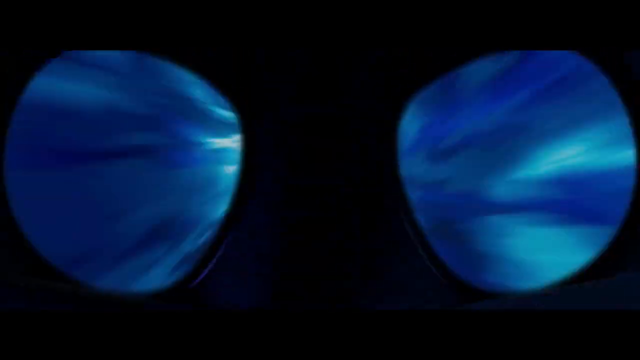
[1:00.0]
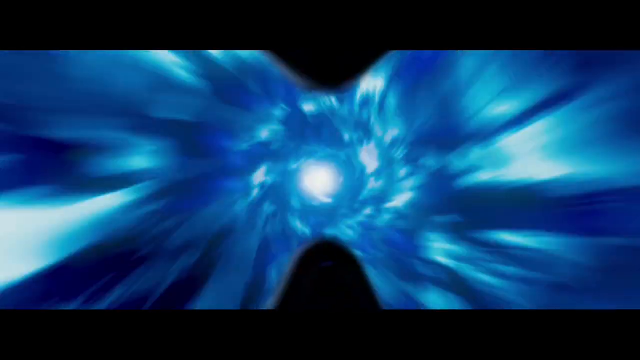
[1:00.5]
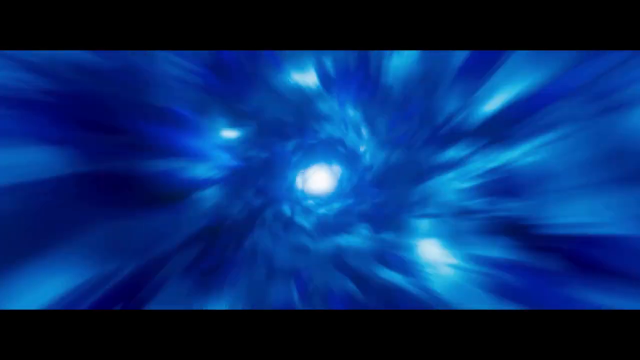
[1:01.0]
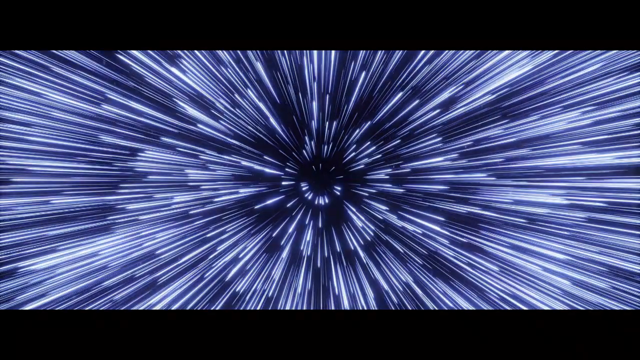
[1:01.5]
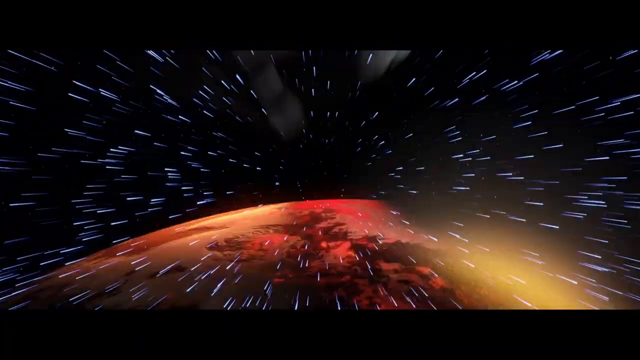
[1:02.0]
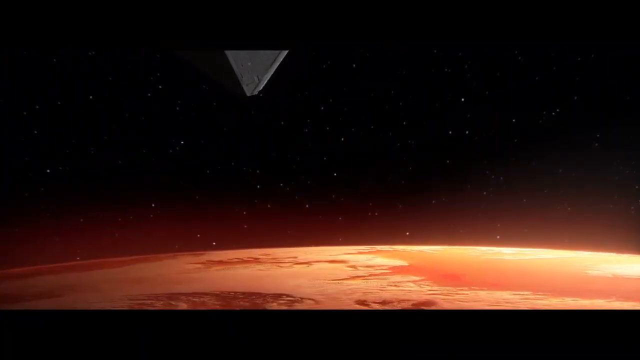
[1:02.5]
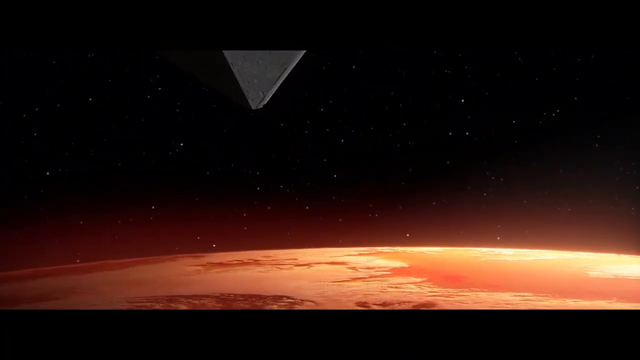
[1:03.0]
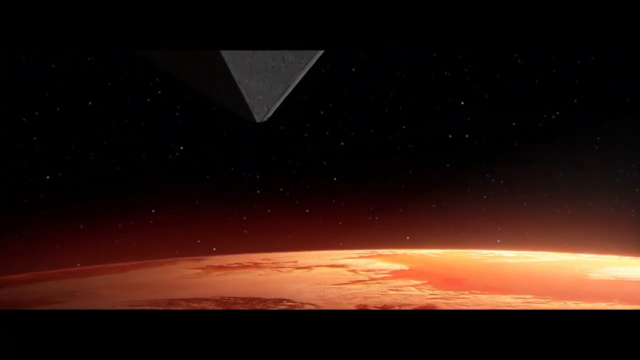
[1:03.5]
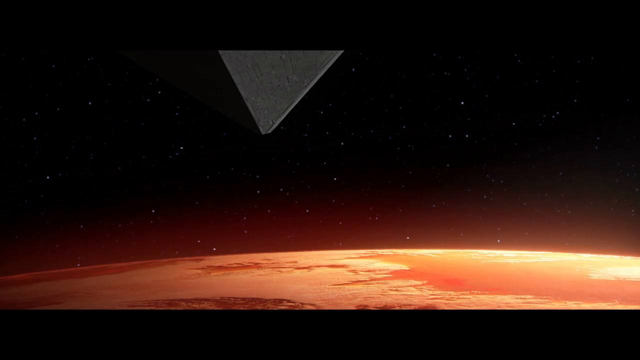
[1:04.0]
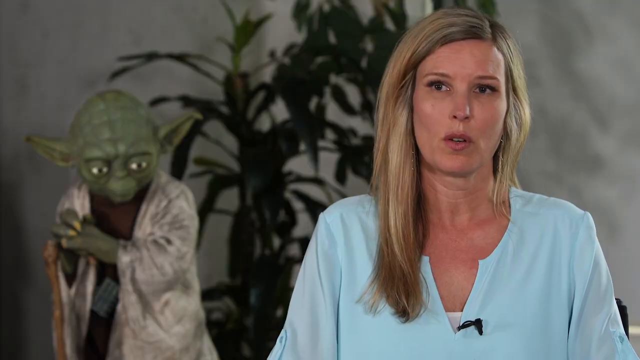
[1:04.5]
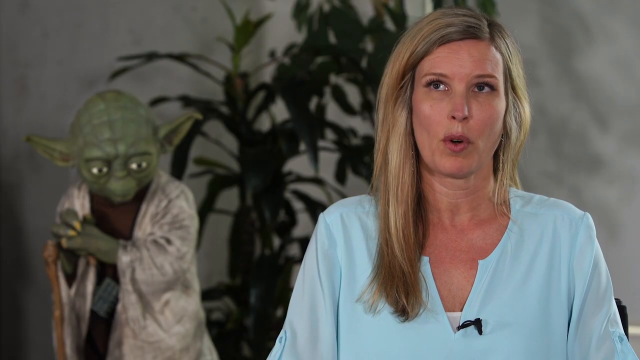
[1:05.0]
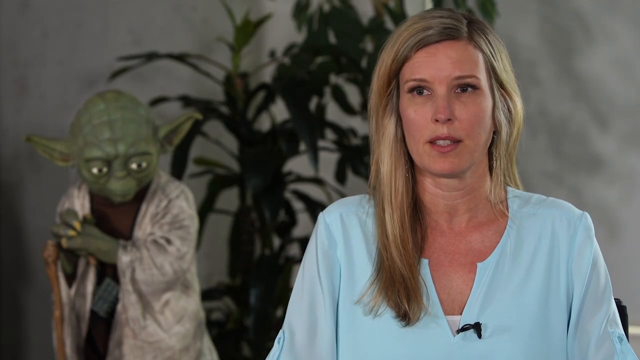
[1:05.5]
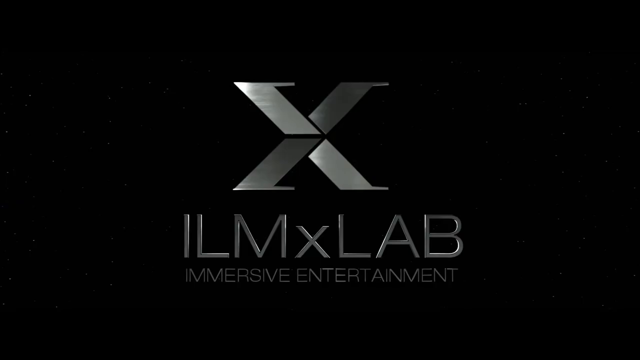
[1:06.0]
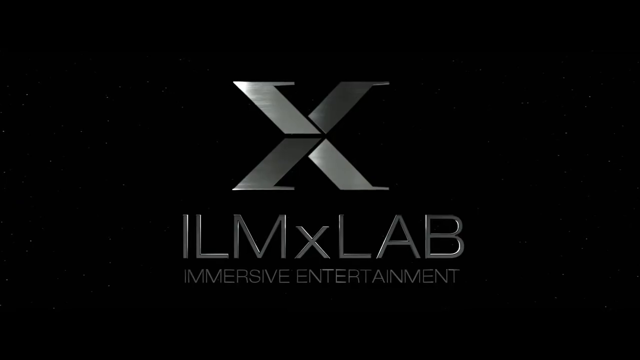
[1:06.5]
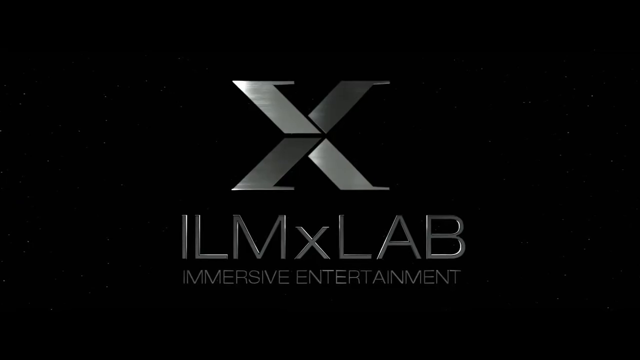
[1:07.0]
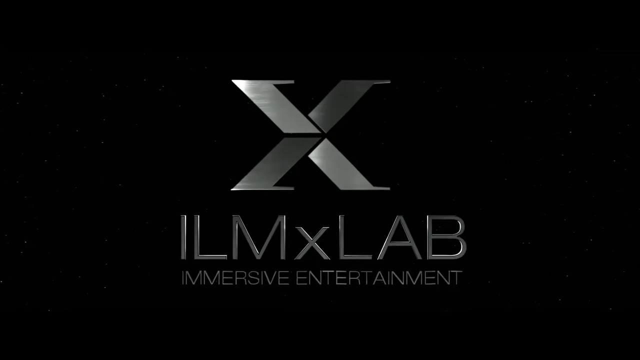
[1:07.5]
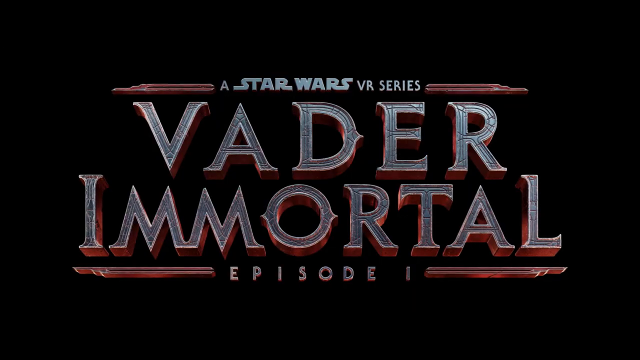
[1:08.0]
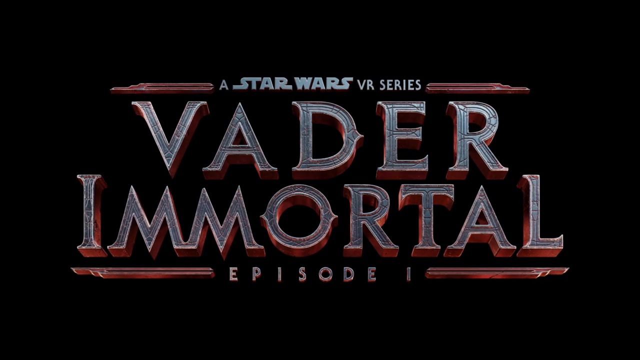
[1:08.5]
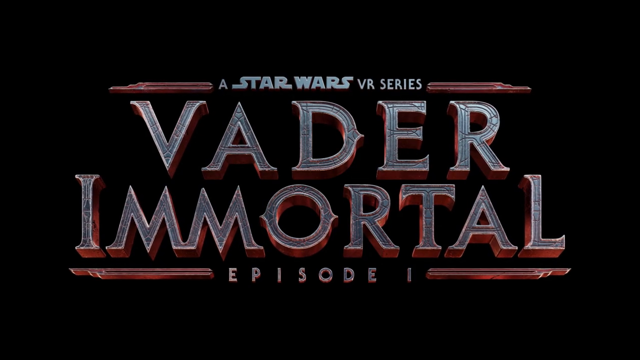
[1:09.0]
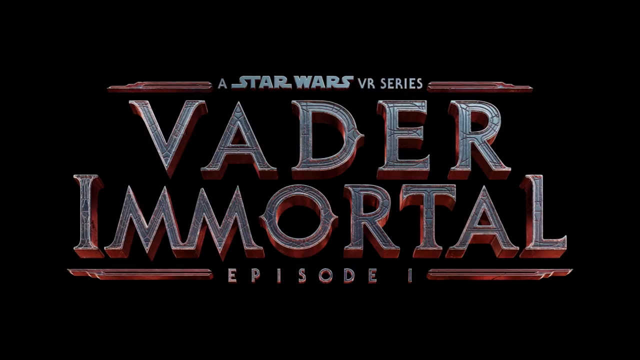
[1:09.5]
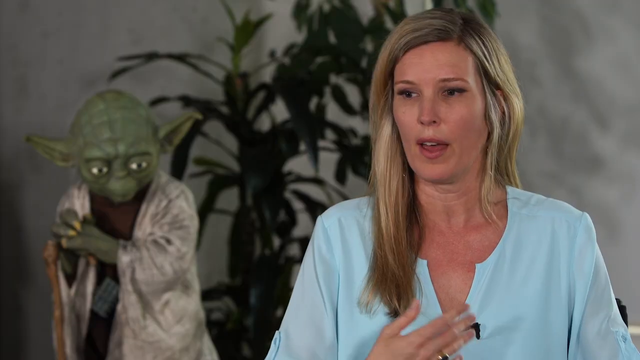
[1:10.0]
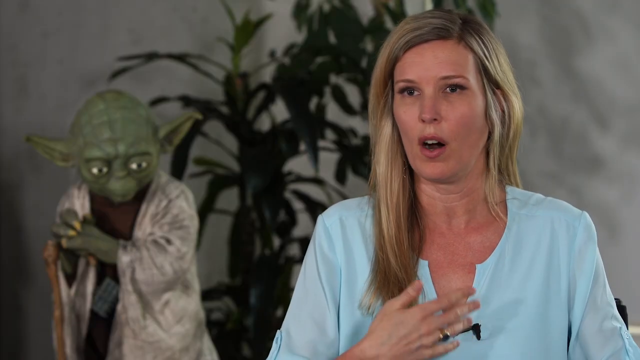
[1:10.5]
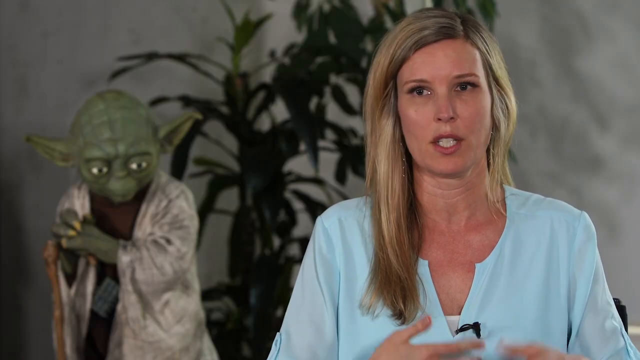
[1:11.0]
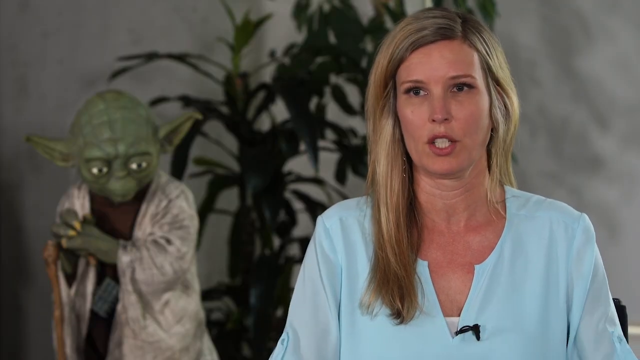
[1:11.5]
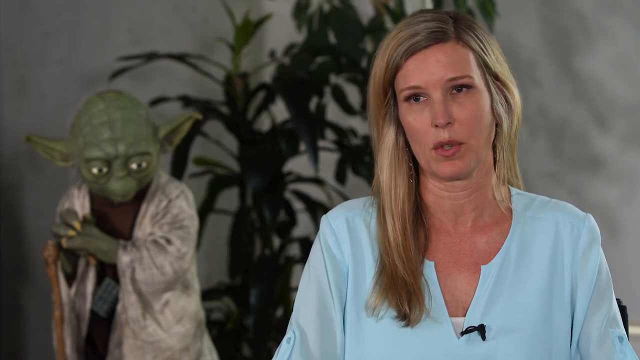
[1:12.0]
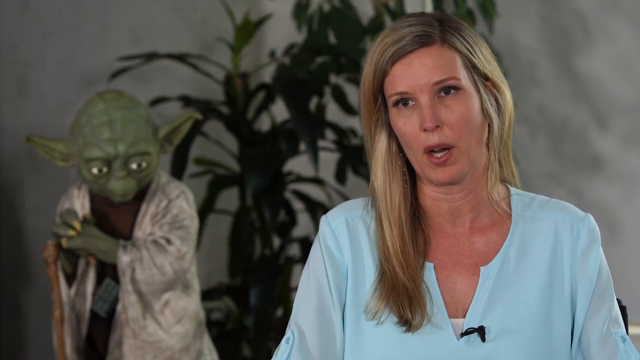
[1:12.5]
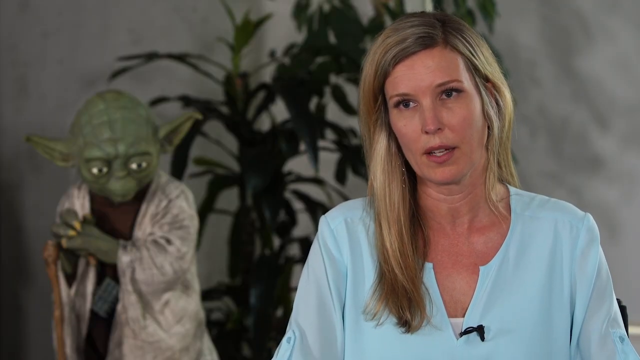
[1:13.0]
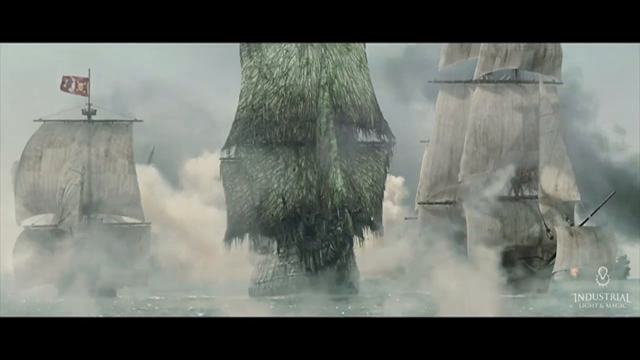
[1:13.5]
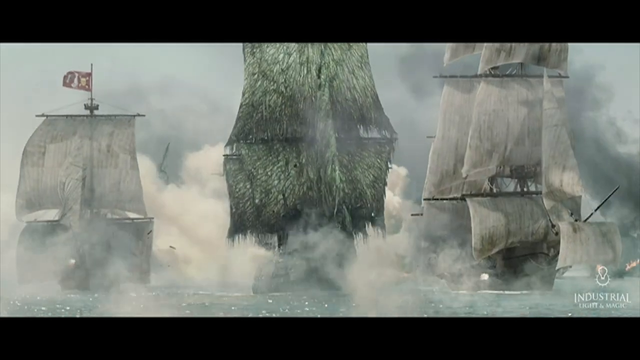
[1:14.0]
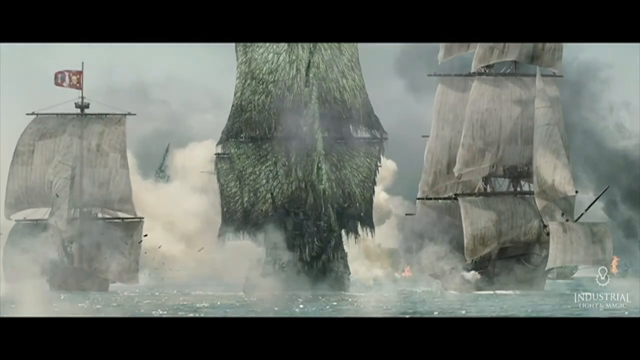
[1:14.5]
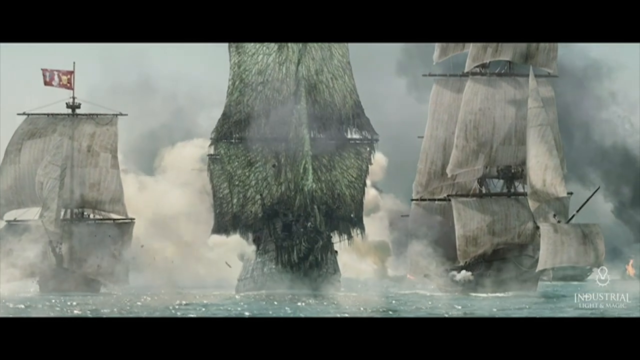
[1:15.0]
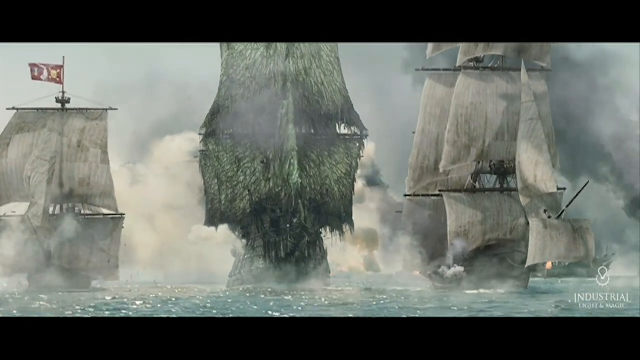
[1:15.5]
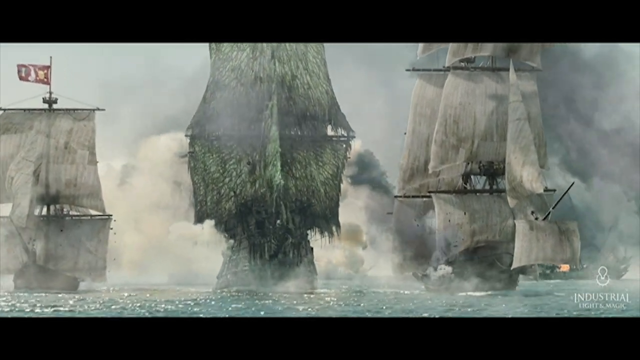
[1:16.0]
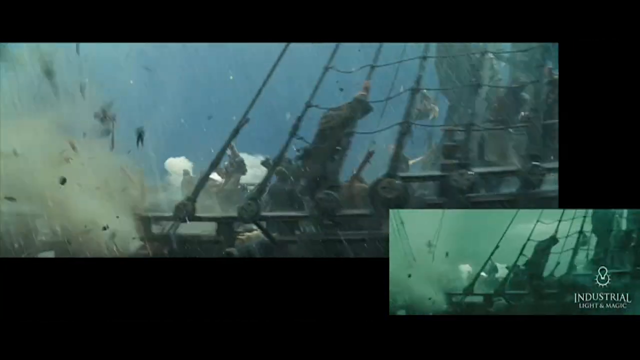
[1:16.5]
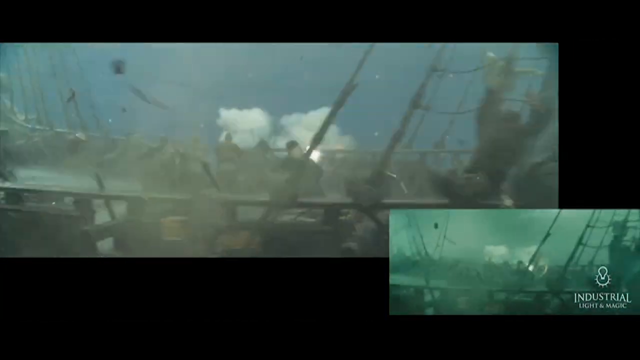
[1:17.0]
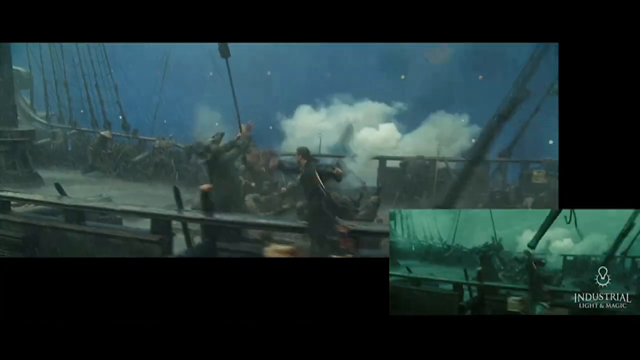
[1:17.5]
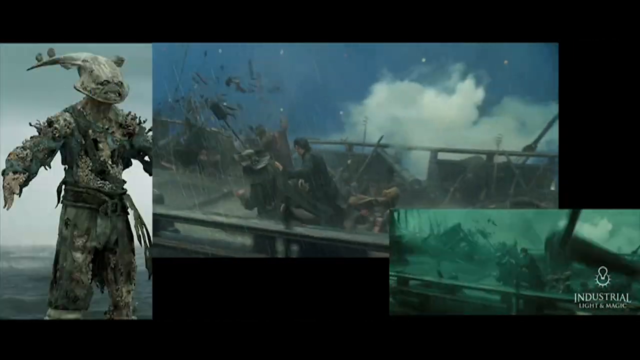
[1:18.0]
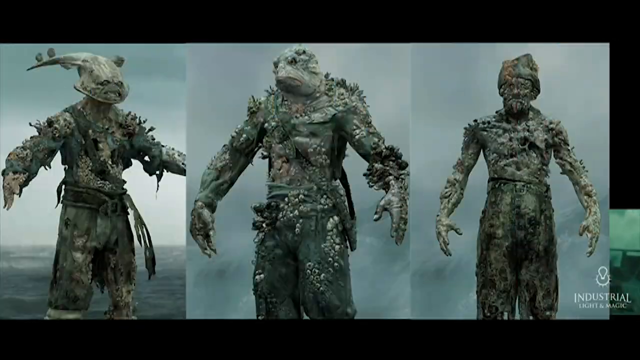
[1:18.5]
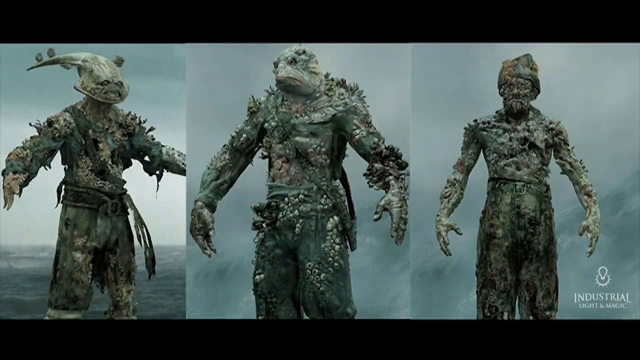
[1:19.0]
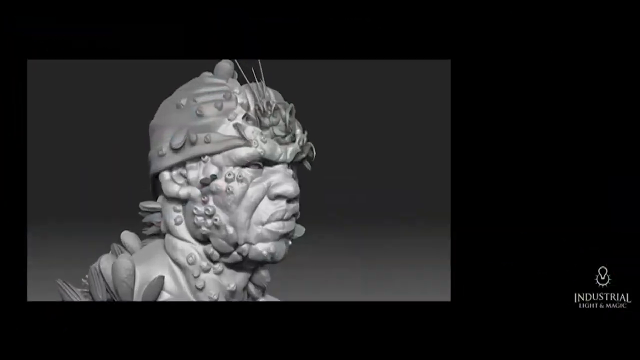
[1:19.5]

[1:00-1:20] The view looks through goggle eyes as they go into warp speed. A big Star Wars ship comes in, and ships come into orbit around planets. The video shows how a virtual reality game was made, apparently Vader Immortals episode 1, a VR series. A ship scene appears, possibly from Pirates of the Caribbean; the middle ship is green, as if grass or algae is growing on its front. The shot is shown before and after the blue screen material is added.